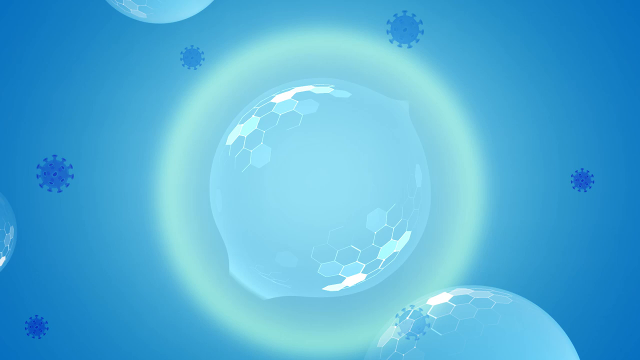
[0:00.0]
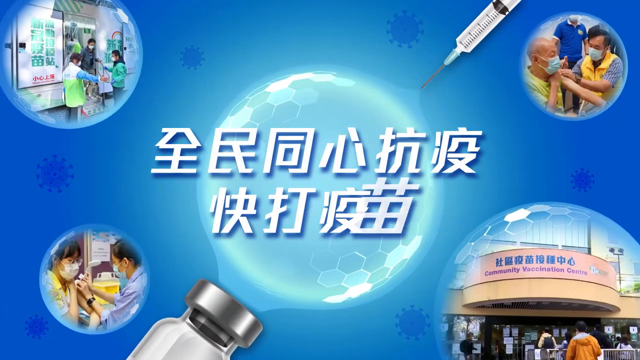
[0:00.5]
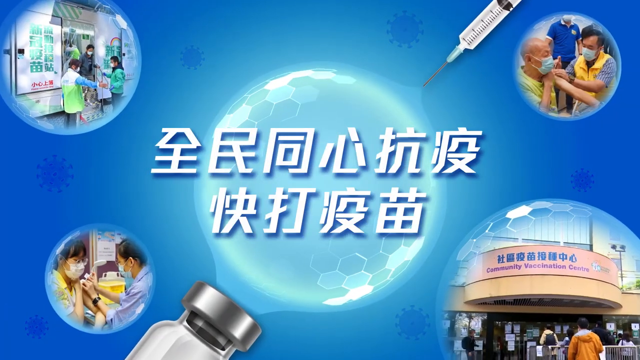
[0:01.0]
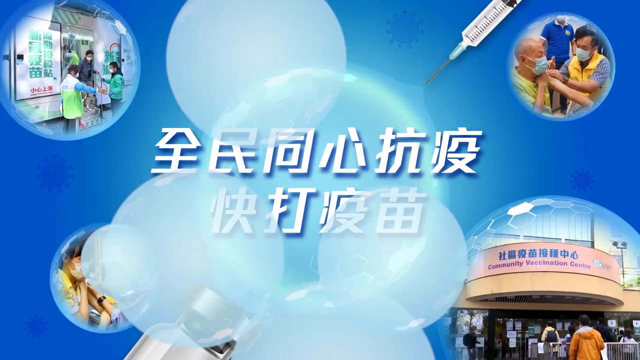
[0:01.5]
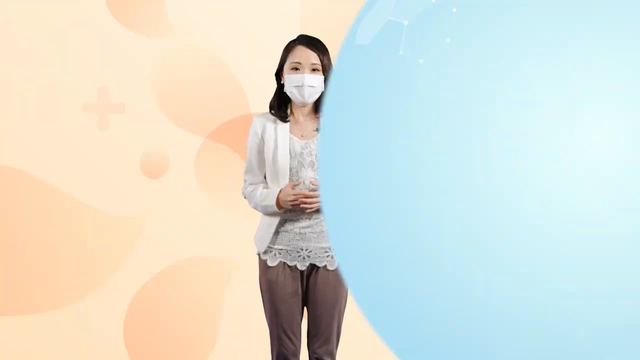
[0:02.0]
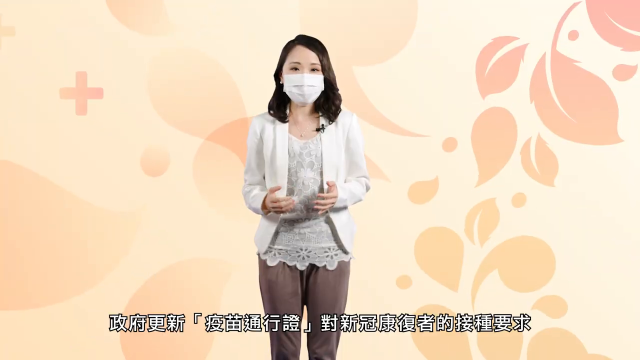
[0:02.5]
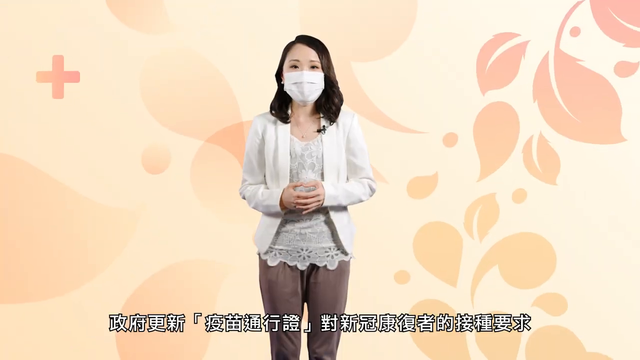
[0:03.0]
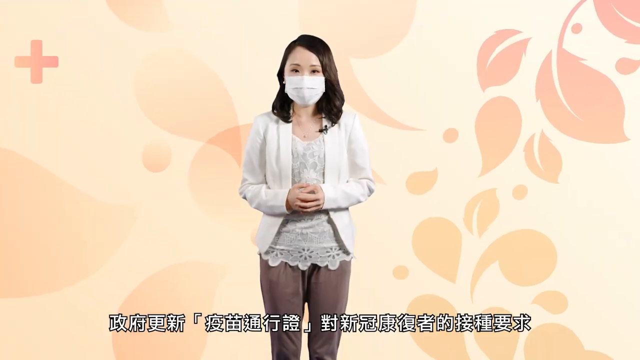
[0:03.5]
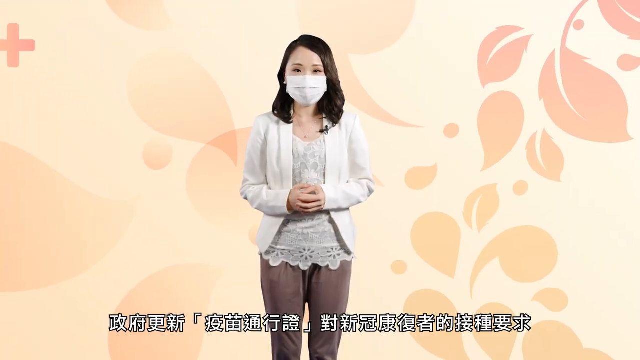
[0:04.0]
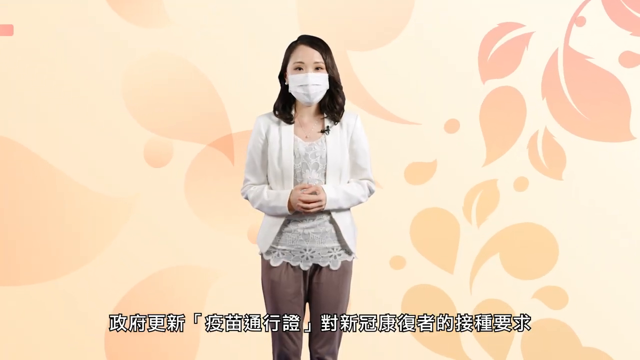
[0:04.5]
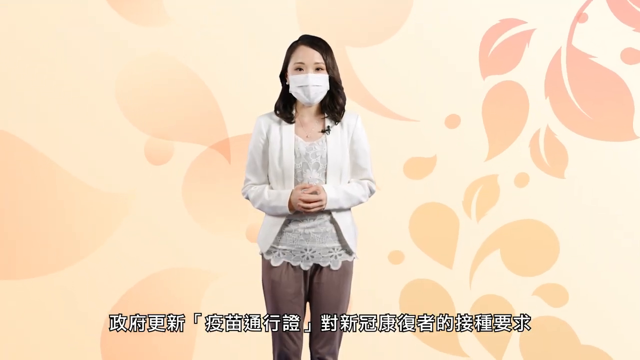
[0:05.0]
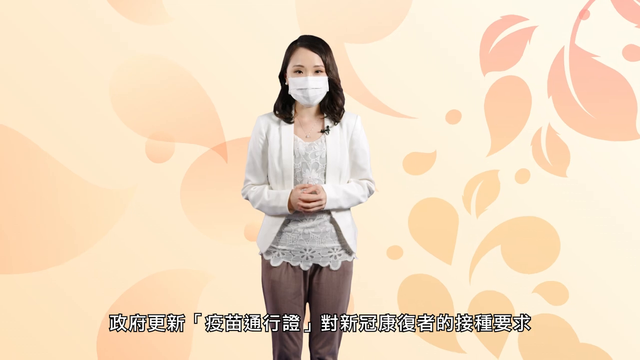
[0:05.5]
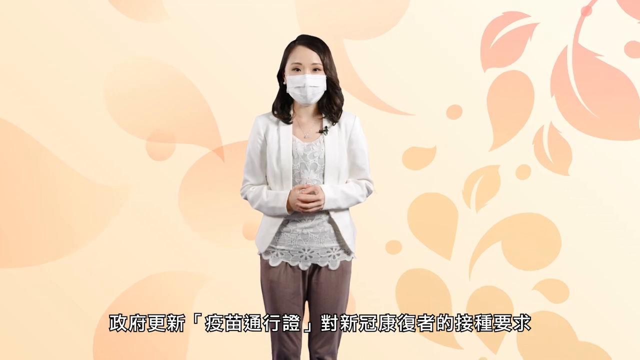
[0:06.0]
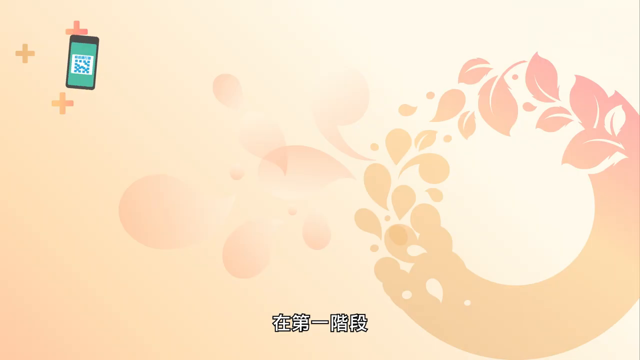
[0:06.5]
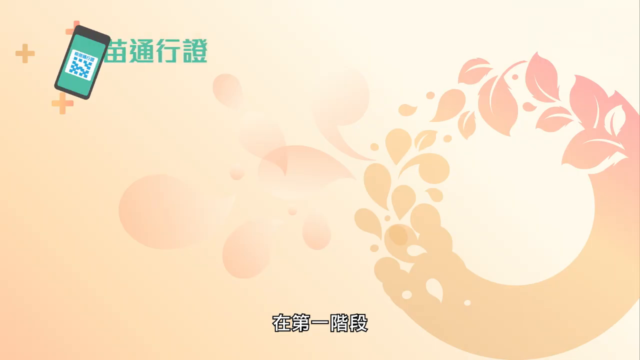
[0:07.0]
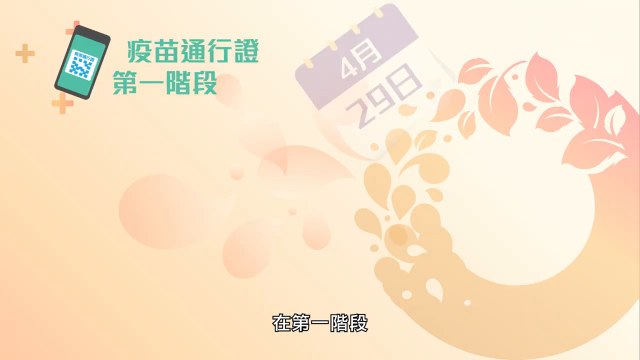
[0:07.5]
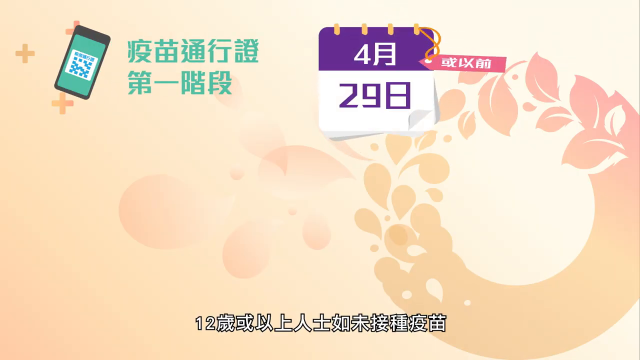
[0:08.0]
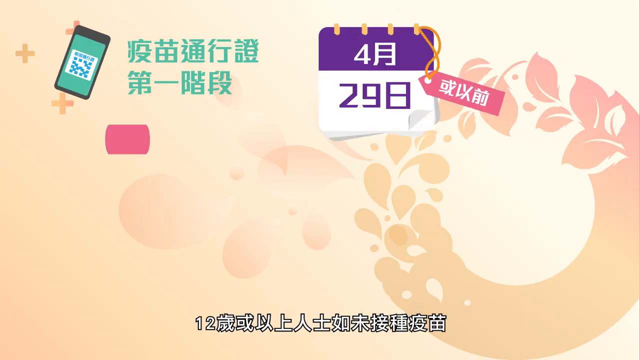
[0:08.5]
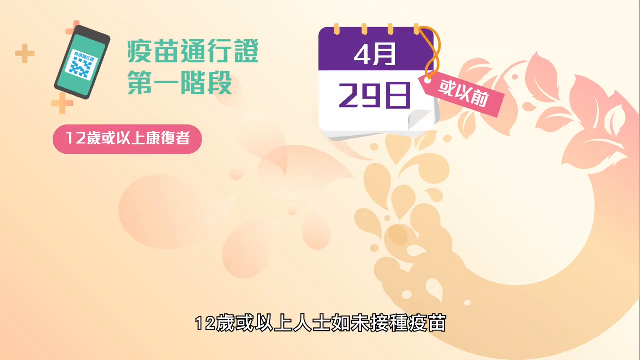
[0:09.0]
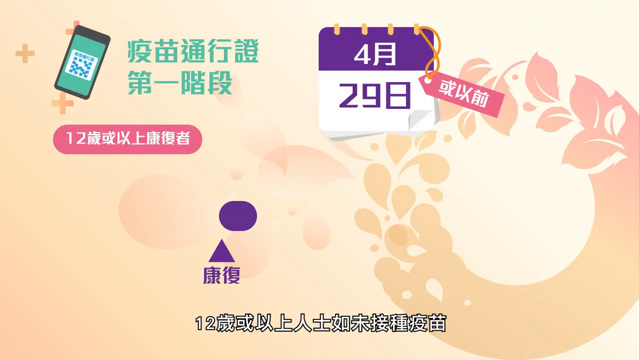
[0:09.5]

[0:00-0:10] An Oriental woman wearing a mask speaks in front of a flowery yellow backdrop while many graphics come on screen. The first graphic is blue and seems to introduce the channel with Japanese writing. Then the woman appears, along with more pop-ups, including a phone and a calendar. All the writing is in what looks like Japanese or Oriental writing. She looks very short. She wears a white mask, a white sweater, kind of beige pants, and a kind of lacy shirt. The mask covers the majority of her face, and her brown hair is visible.